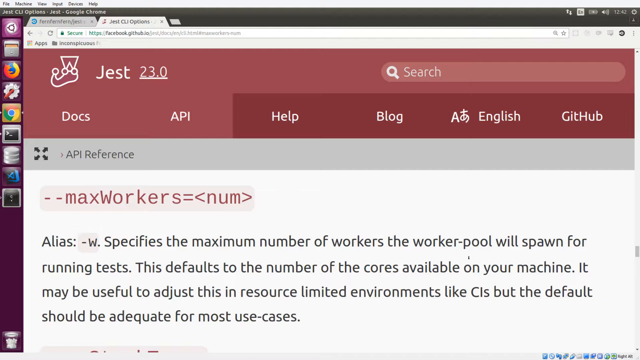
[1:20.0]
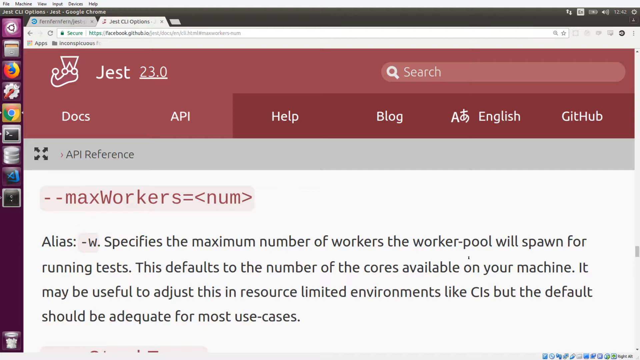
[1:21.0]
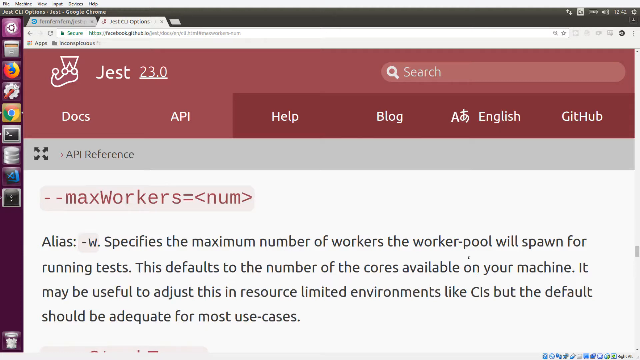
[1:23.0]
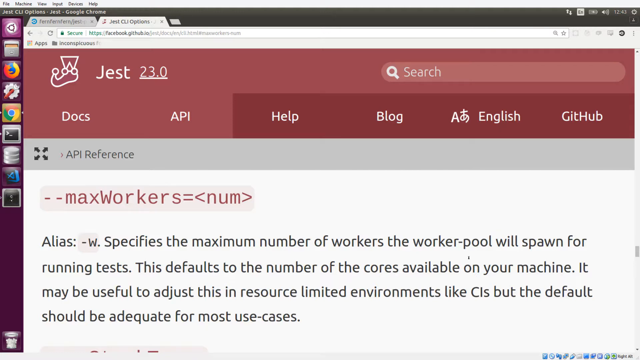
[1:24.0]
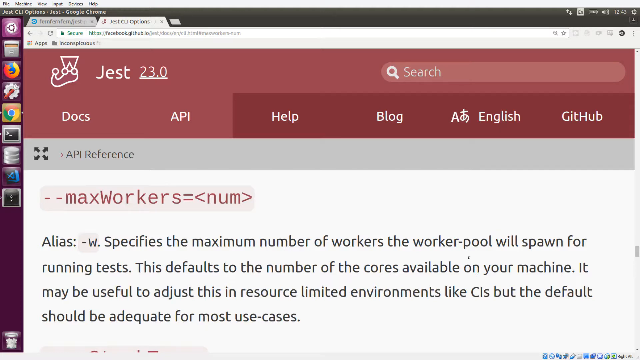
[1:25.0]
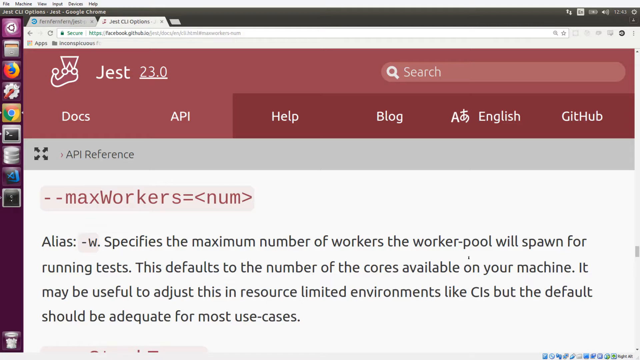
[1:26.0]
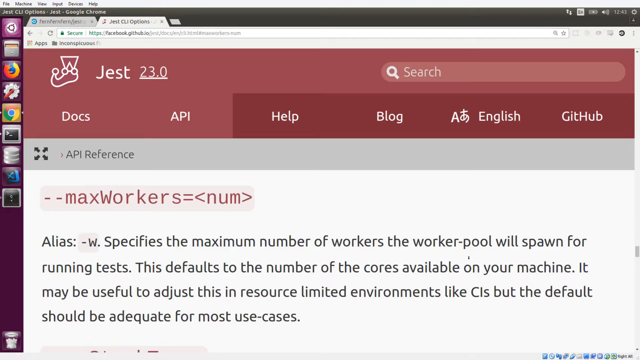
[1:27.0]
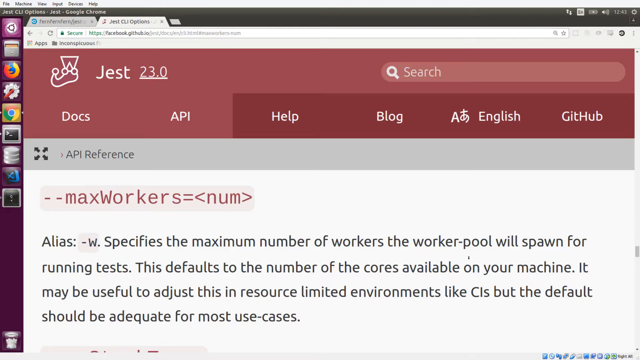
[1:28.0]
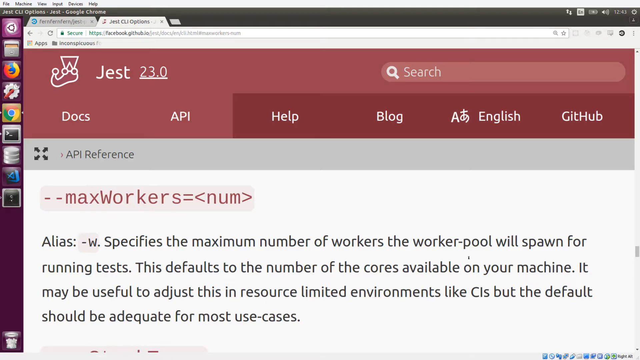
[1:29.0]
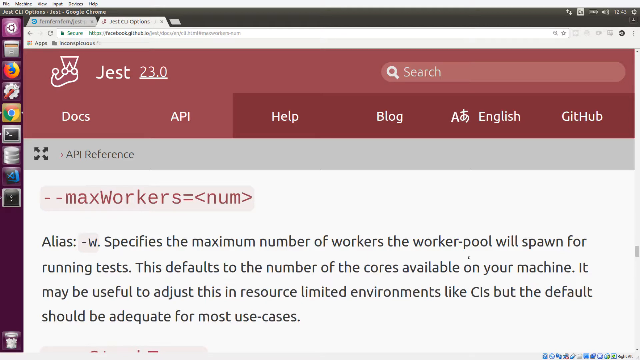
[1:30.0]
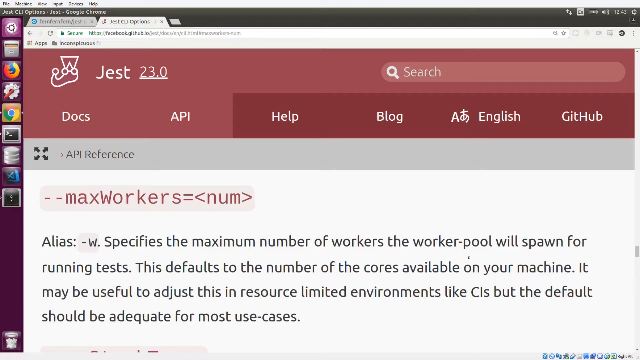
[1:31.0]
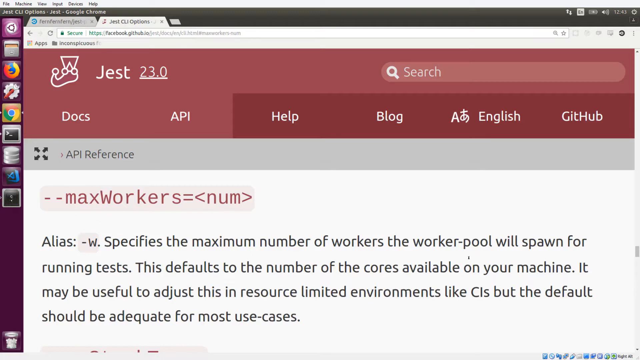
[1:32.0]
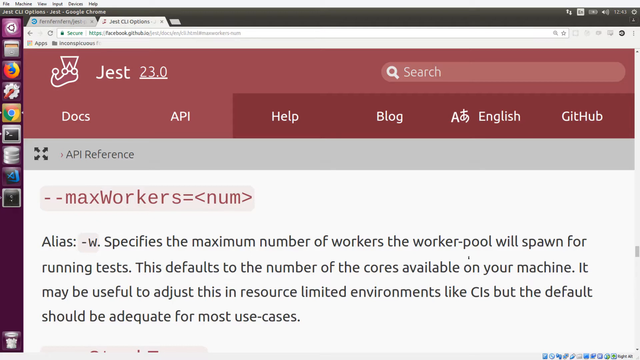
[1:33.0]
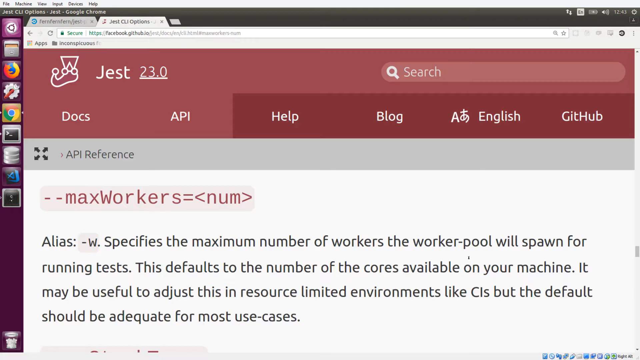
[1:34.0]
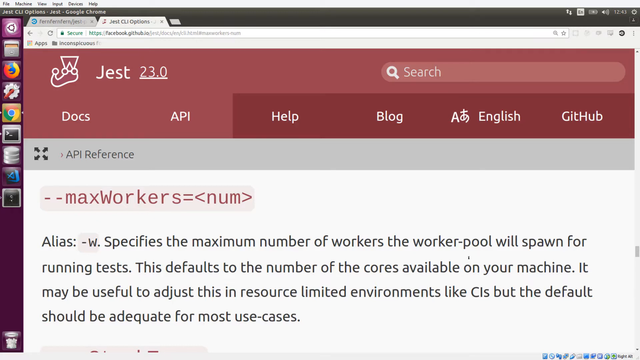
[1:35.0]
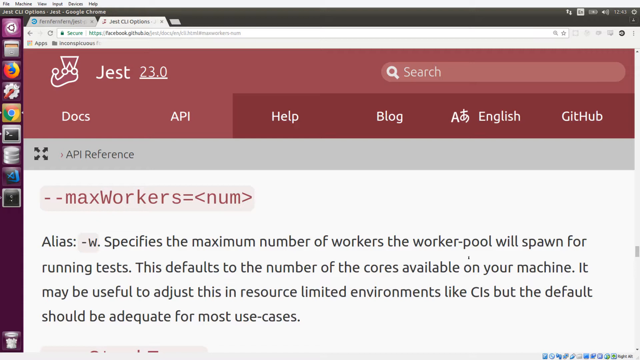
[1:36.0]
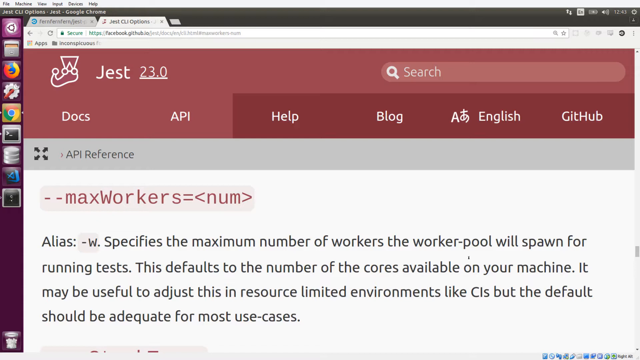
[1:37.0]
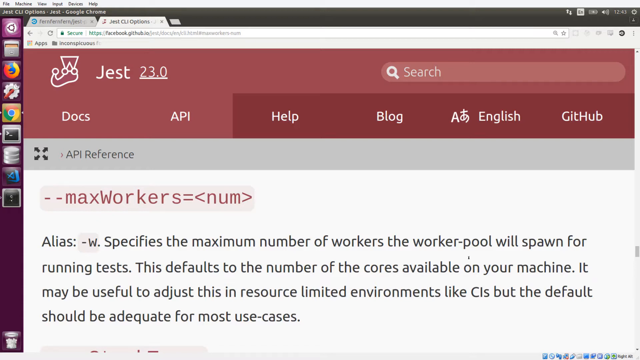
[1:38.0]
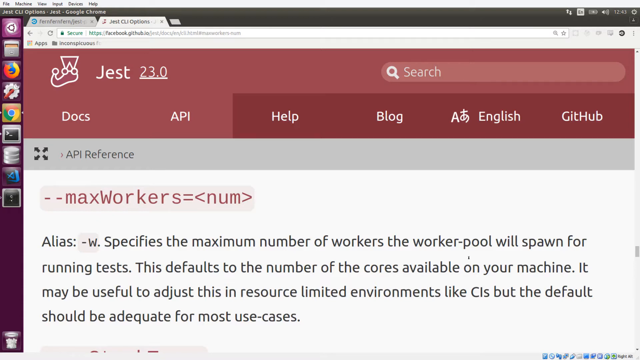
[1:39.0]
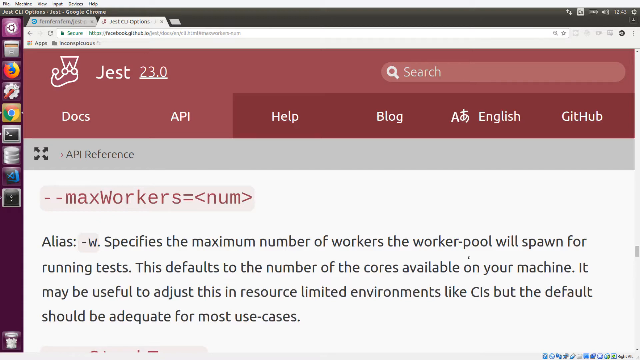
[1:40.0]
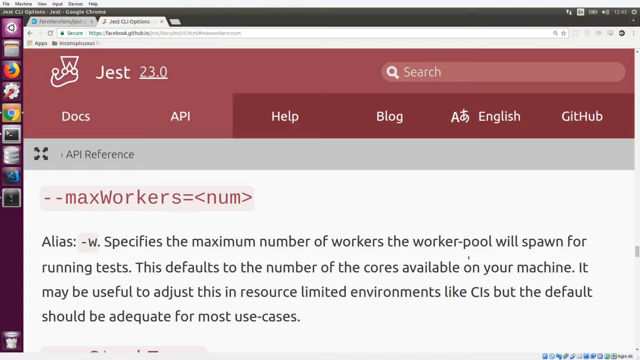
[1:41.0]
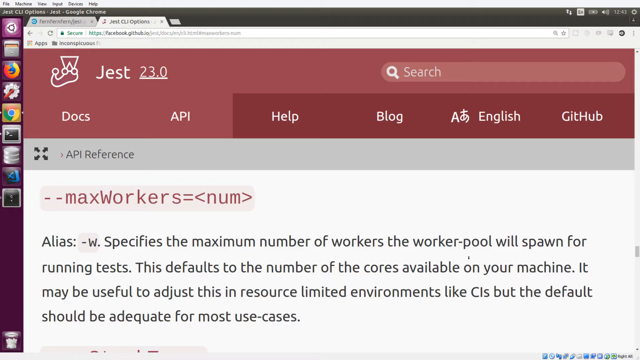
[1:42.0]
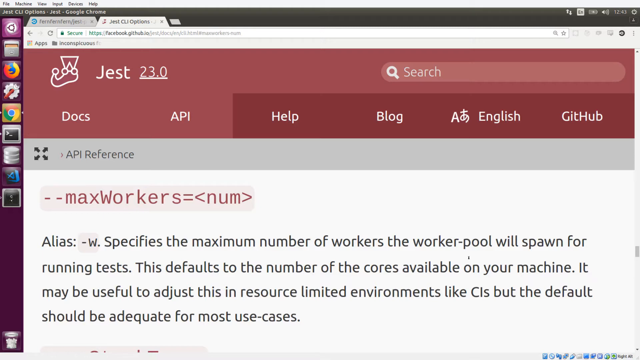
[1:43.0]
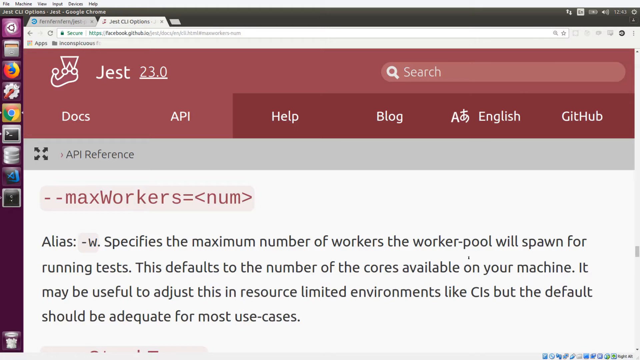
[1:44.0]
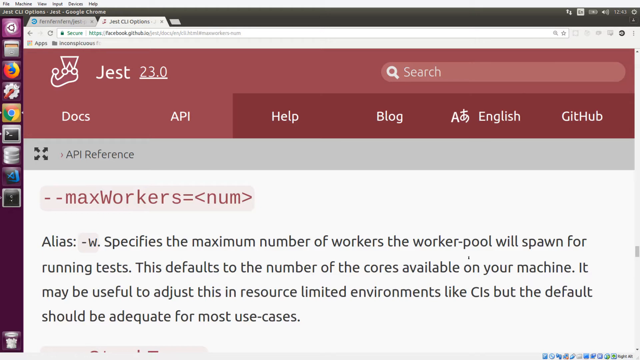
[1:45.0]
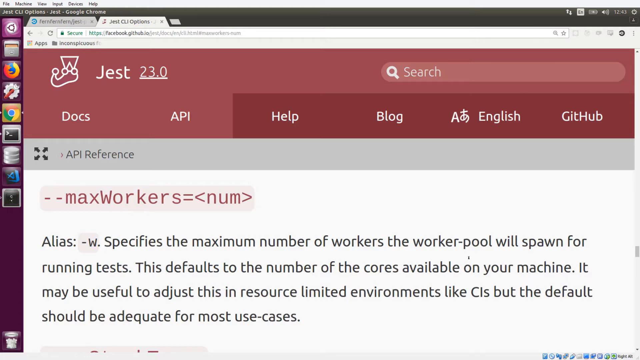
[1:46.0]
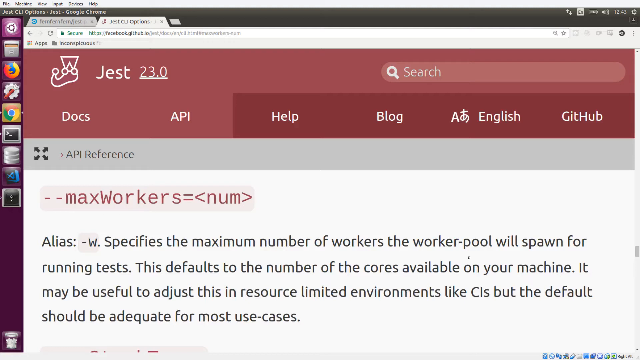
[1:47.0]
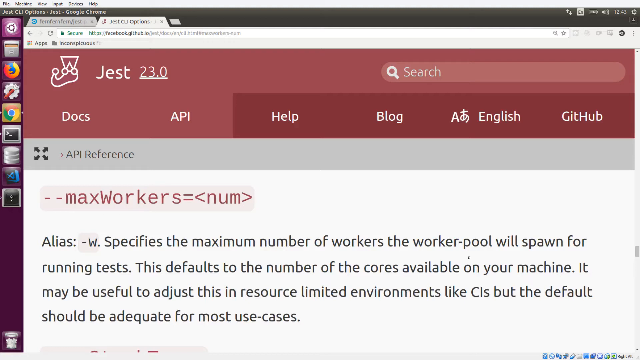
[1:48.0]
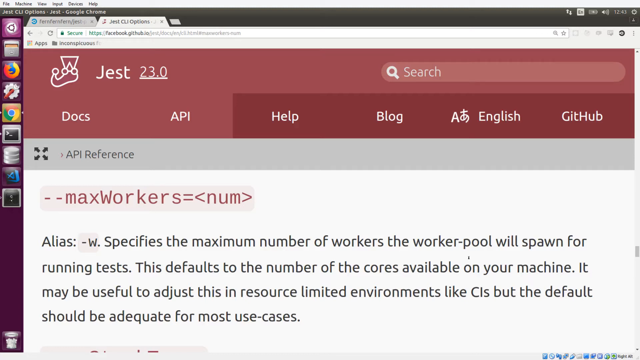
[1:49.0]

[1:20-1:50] The page shows how to set up certain parameters, with content about environments and the number of cores on the machine. It seems to relate to HTML or programming for a site, showing which tags or parameters to use, apparently for testing and designing websites.